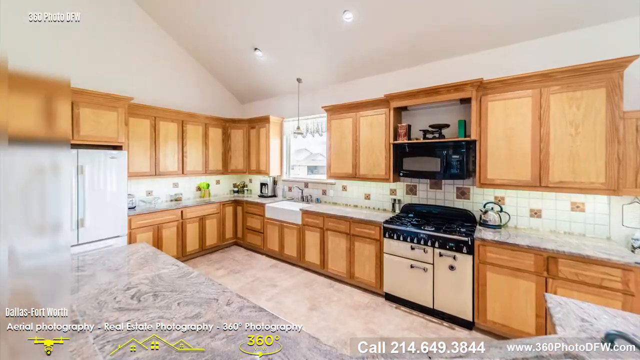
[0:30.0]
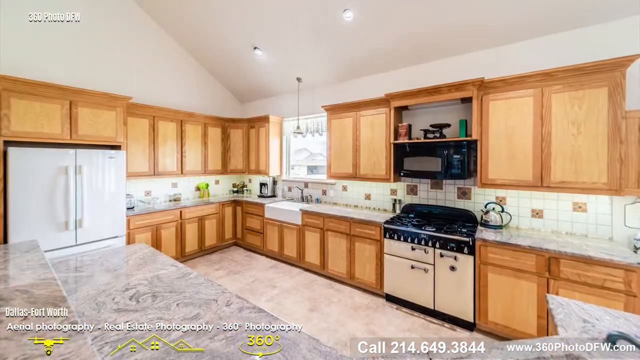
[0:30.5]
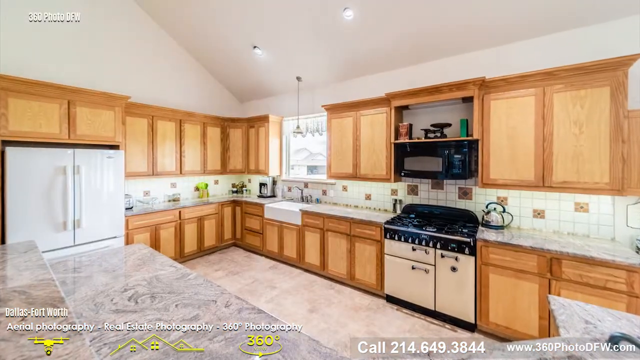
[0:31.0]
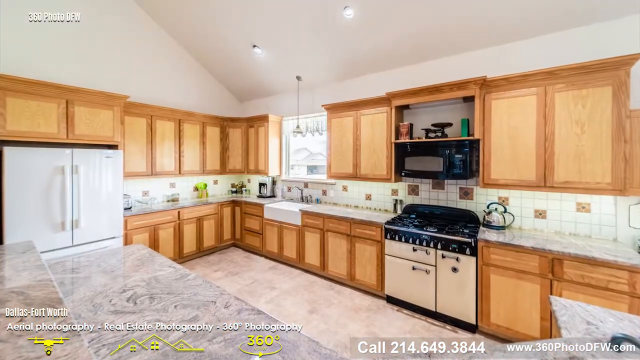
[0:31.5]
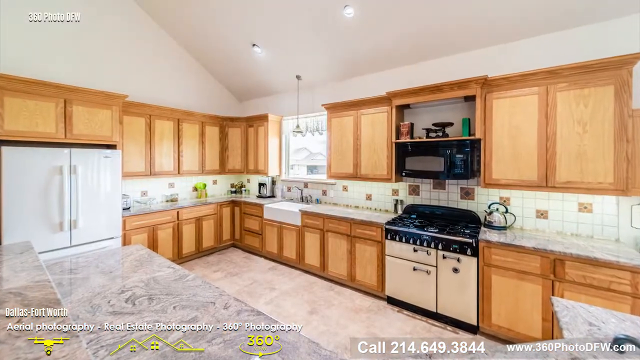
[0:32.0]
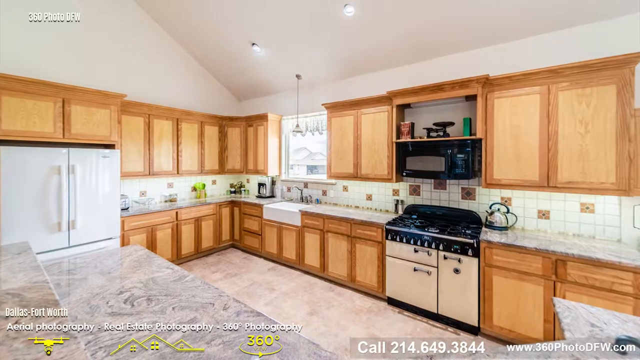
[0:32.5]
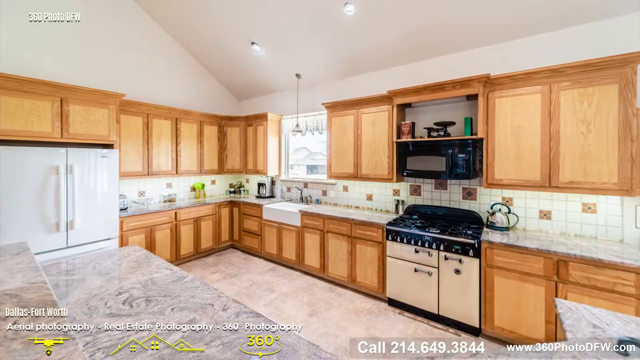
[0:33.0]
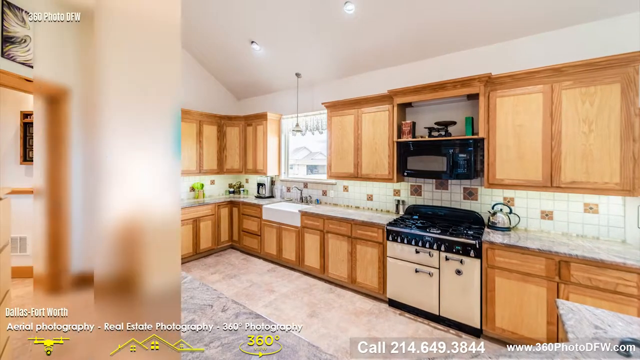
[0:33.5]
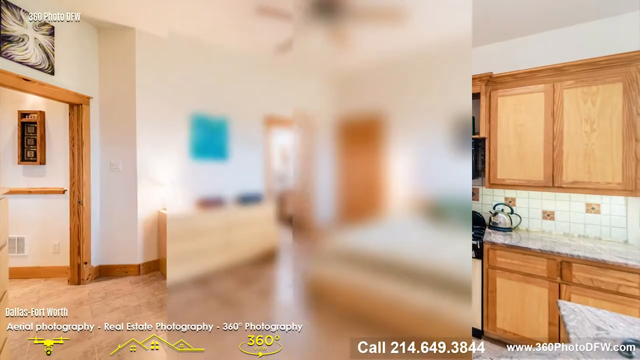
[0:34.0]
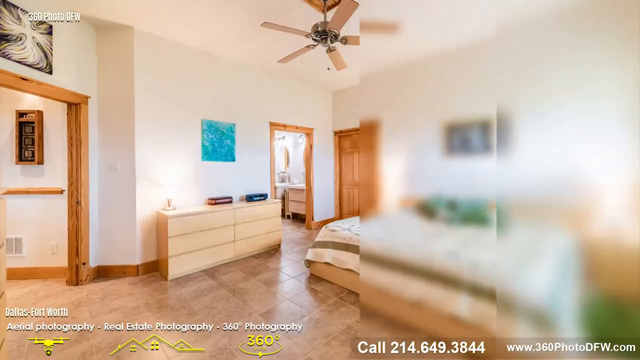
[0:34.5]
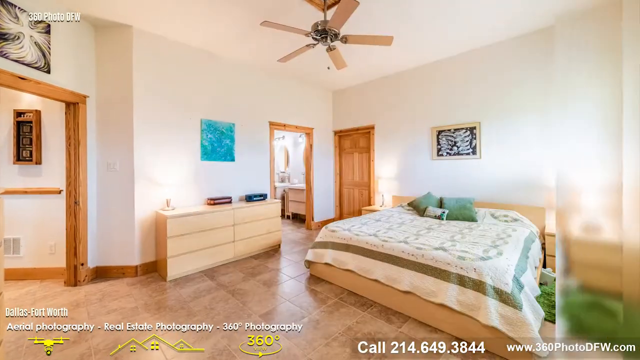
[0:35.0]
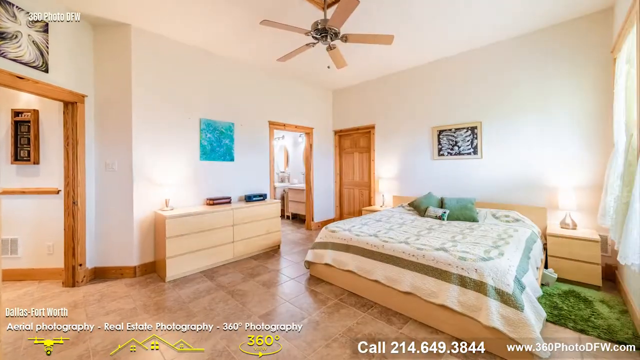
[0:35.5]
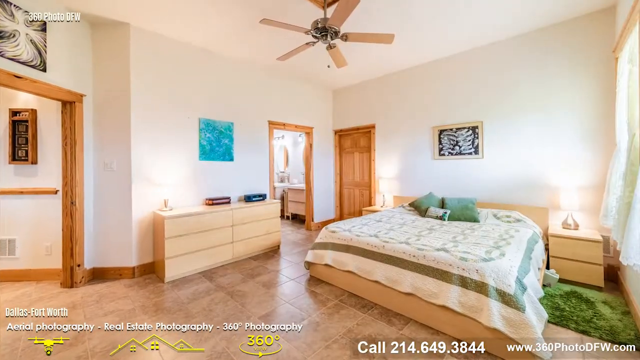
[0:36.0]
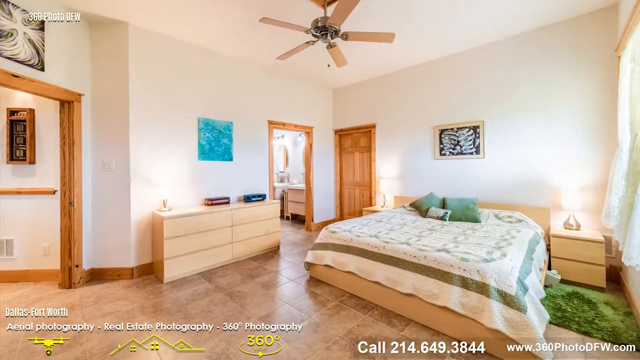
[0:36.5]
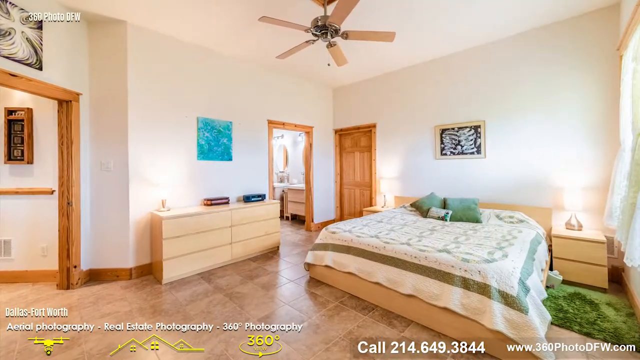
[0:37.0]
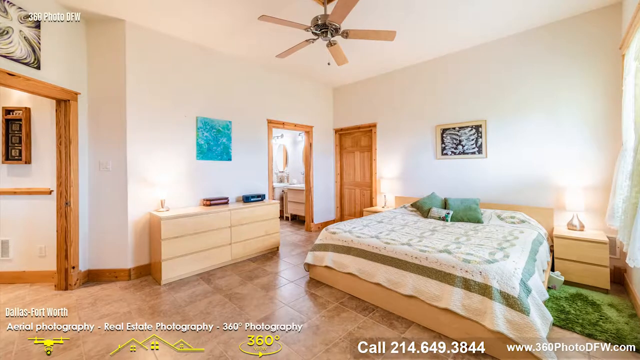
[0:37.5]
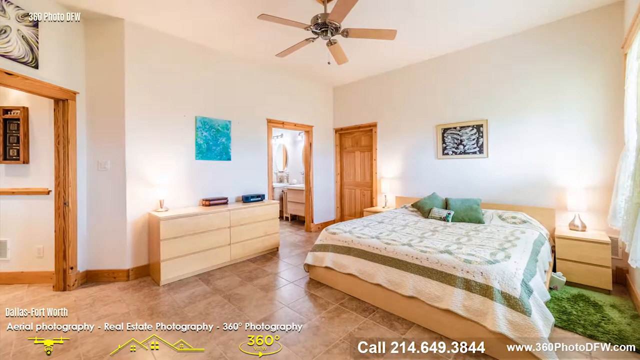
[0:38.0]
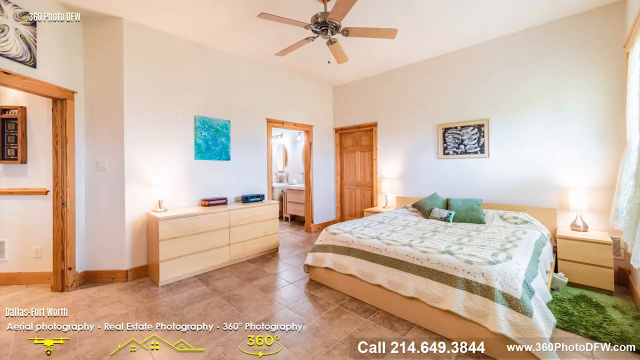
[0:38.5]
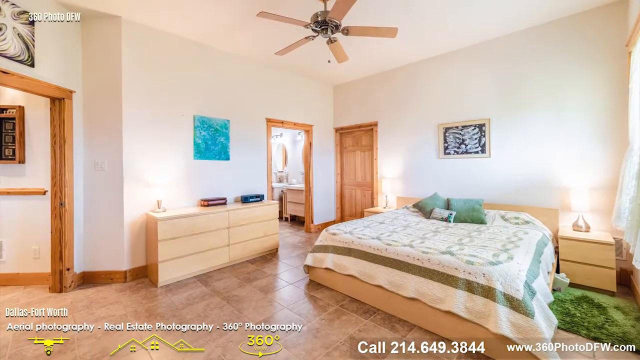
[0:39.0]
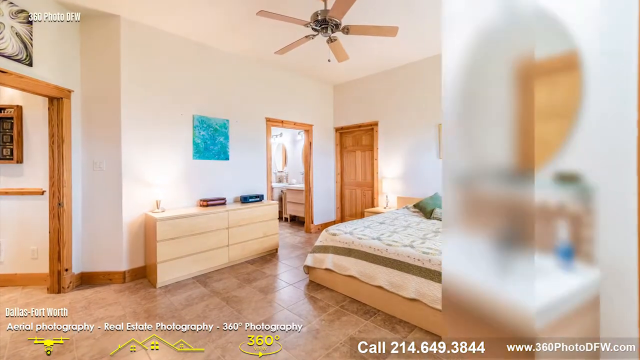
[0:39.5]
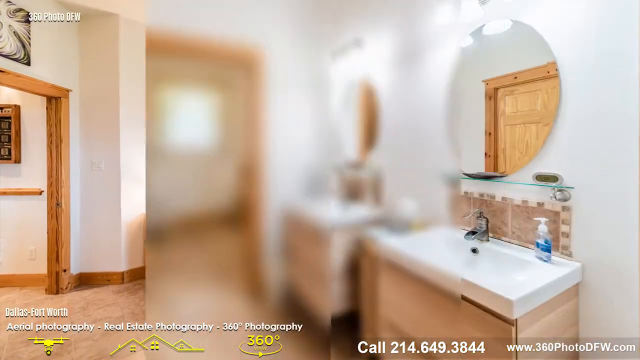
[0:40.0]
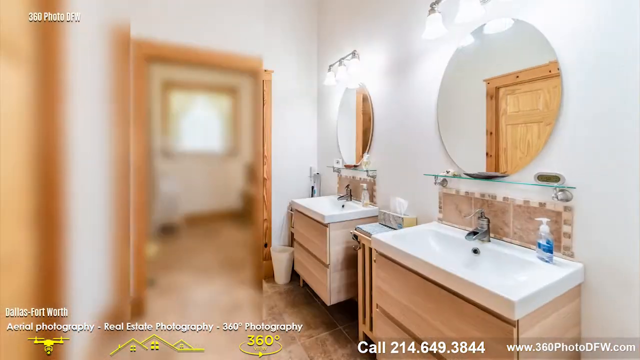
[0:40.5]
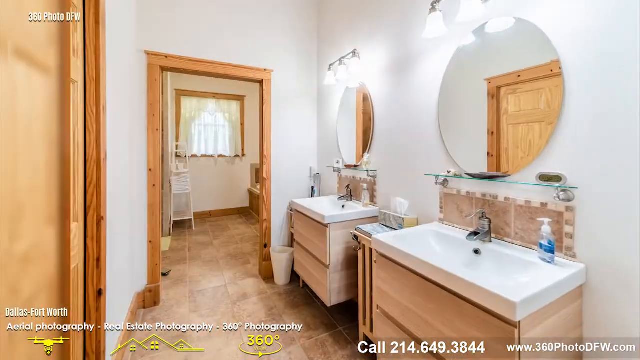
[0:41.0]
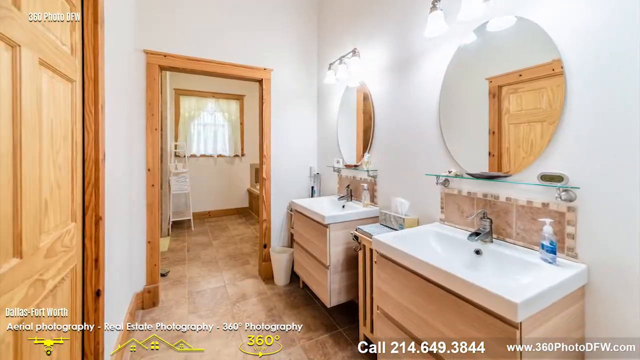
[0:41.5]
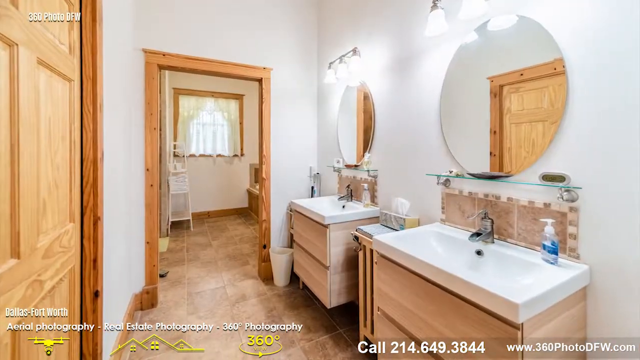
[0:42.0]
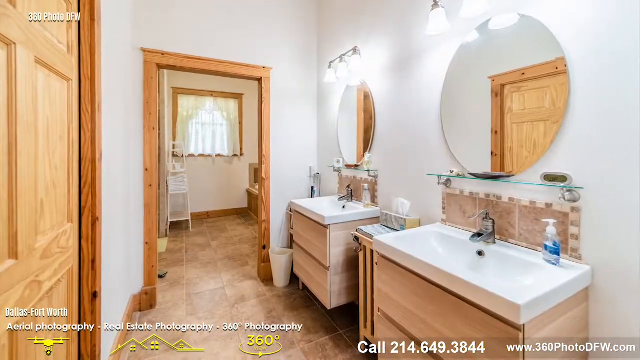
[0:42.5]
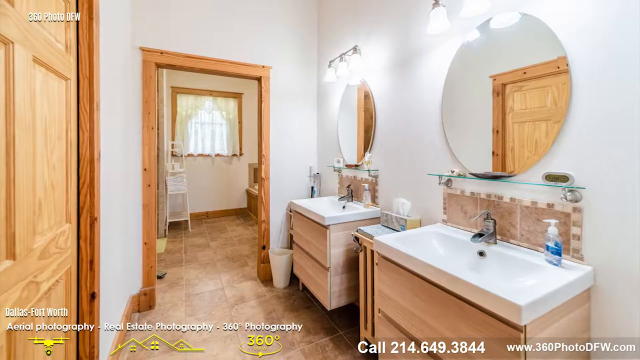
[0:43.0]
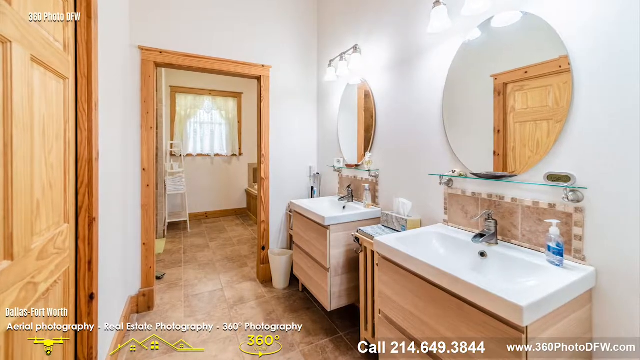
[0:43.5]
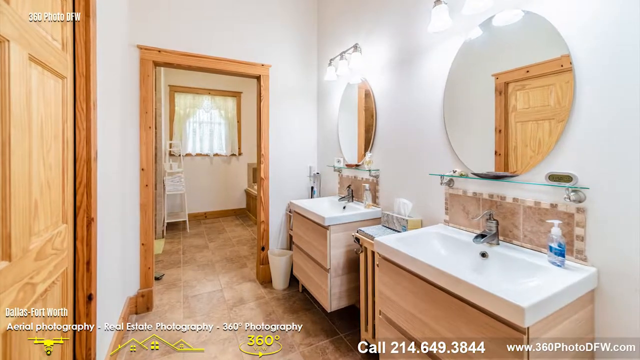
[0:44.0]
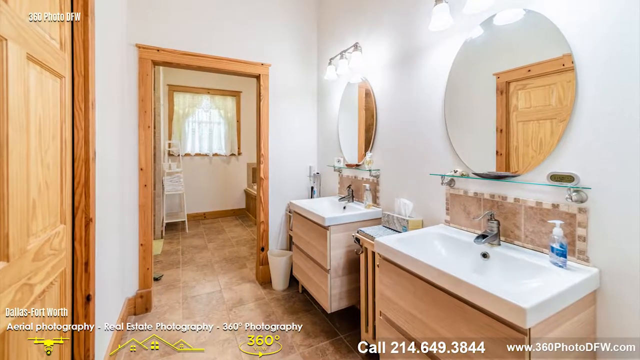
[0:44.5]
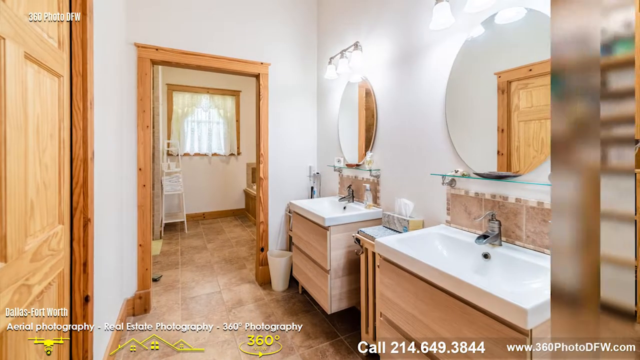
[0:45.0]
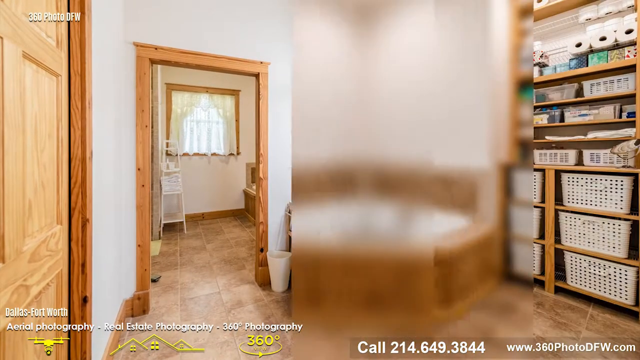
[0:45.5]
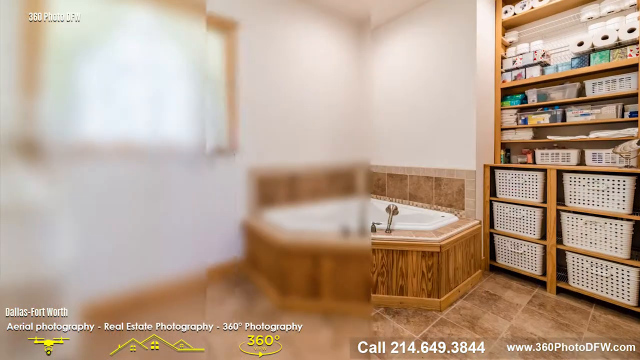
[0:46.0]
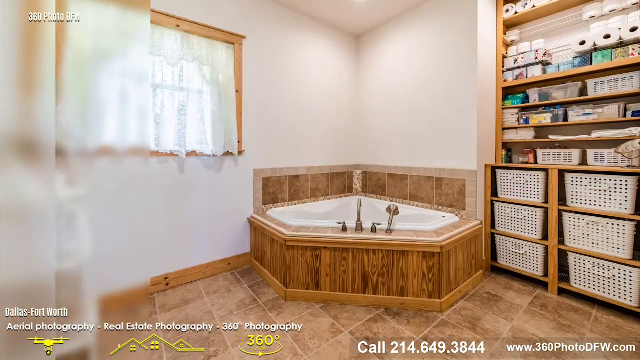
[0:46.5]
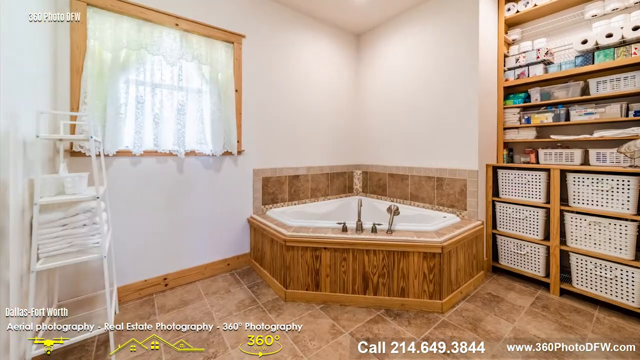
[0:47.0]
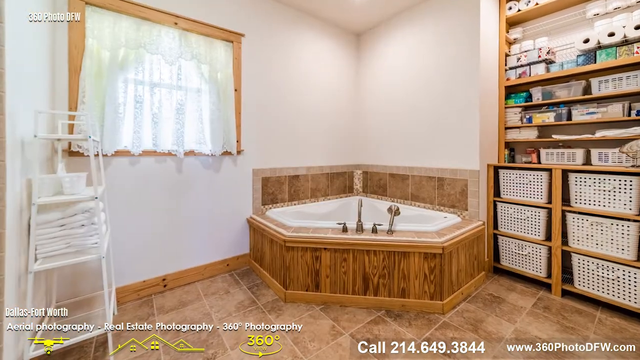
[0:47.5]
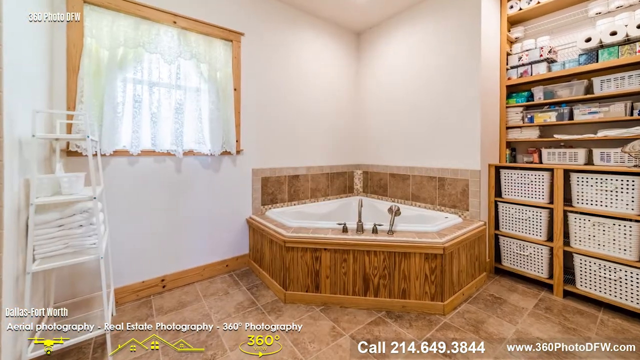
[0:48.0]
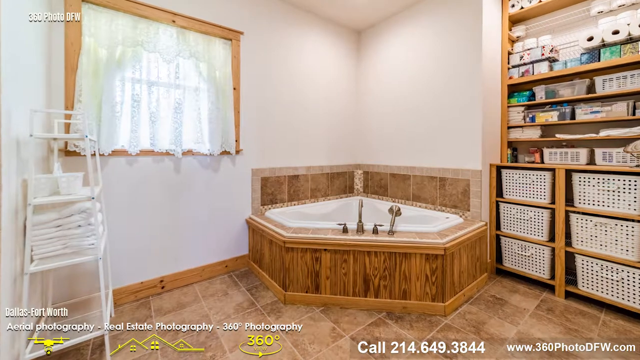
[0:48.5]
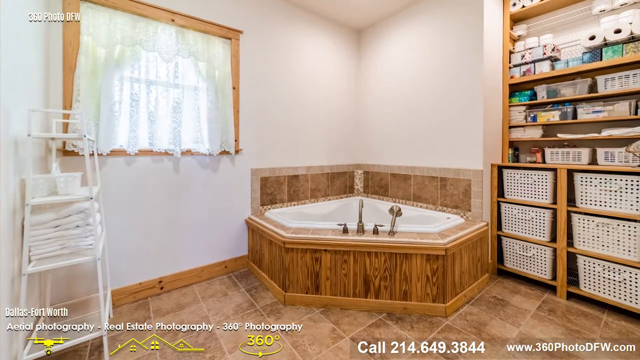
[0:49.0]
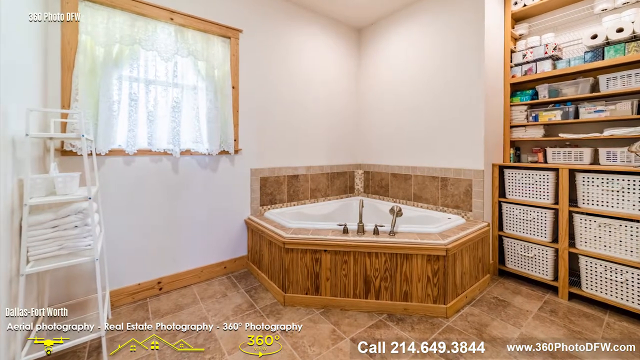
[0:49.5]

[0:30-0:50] The view of the kitchen shows countertops and cabinets, all light wood colored, some windows with a lot of daylight coming in, and black appliances including the stove and microwave. A white refrigerator is on the left side of the frame. All the images so far are stills. A swipe leads to a still image of a bedroom with a large bed and standard bedroom furniture, all light wood colored, a fan overhead, small blue artwork on the left side, small black and white artwork above the bed, and small black and white artwork above a door frame leading to another room. Another door is closed, and another open door leads to a bathroom. On the right side of the frame a window lets in a lot of daylight. A swipe leads to the bathroom, which has two separate small sinks, each with a circular mirror above. A door is open, showing another room, probably the bedroom from before, and another door to the left is closed. Most of the doors, cabinets, and fixtures are light brown. A wipe shows another view of the bathroom: a hexagonal bathtub in the corner, perhaps a hot tub, with large storage cabinets to its right, storage baskets in the three lowest levels. On the left side of the frame is a window with white curtains letting in a lot of daylight, and a towel holder. The floor looks like tile in a neutral brown color.